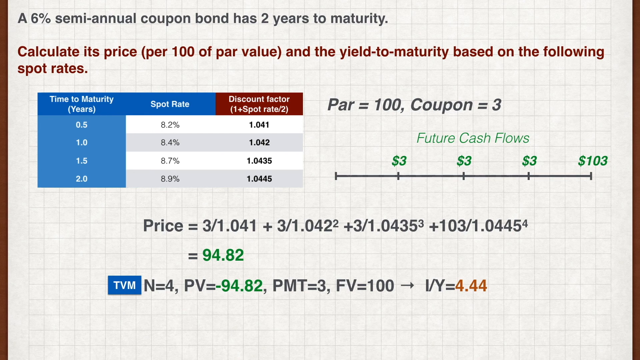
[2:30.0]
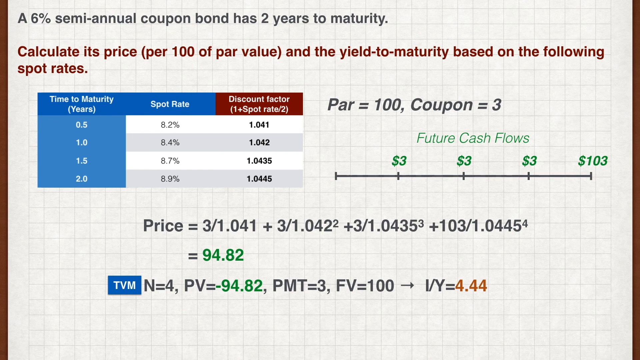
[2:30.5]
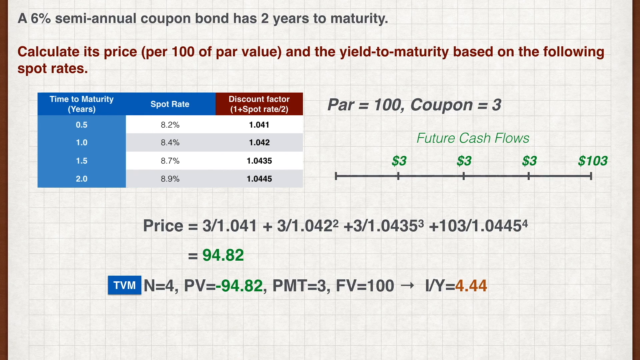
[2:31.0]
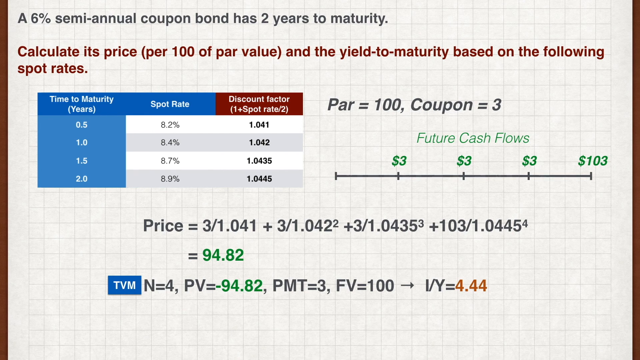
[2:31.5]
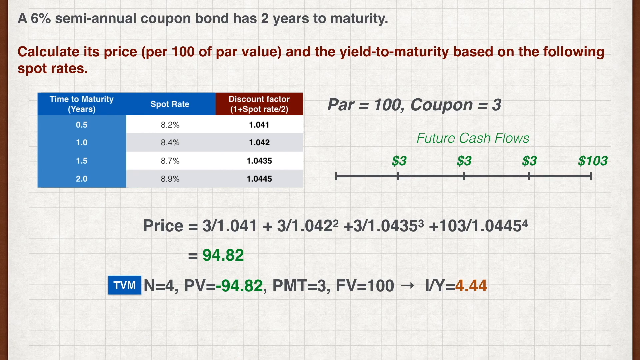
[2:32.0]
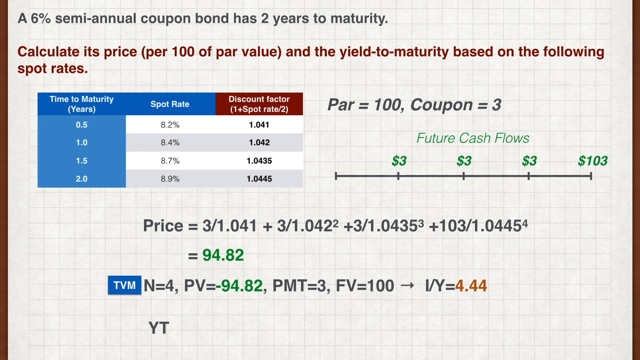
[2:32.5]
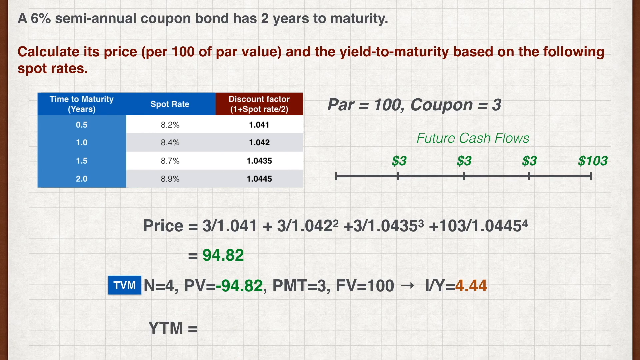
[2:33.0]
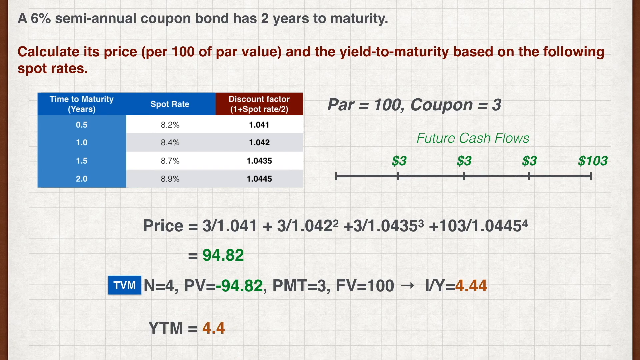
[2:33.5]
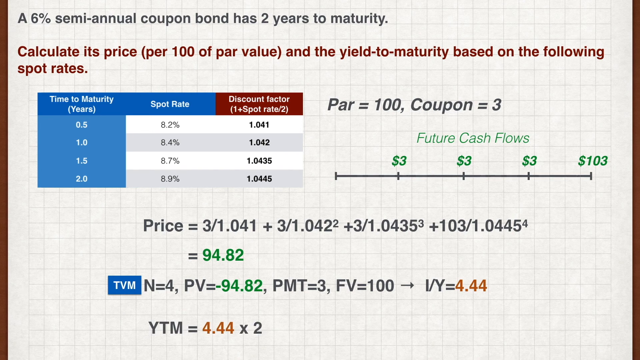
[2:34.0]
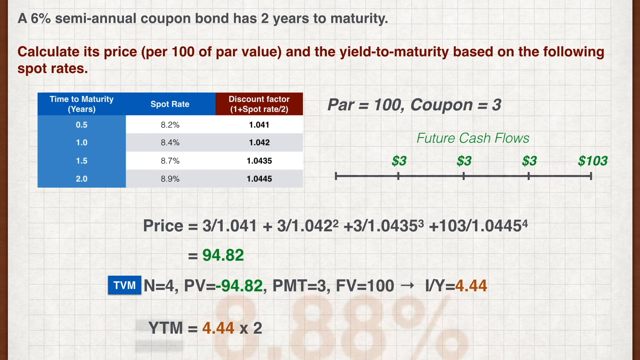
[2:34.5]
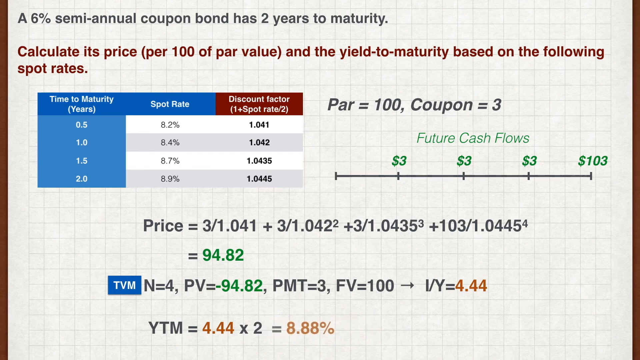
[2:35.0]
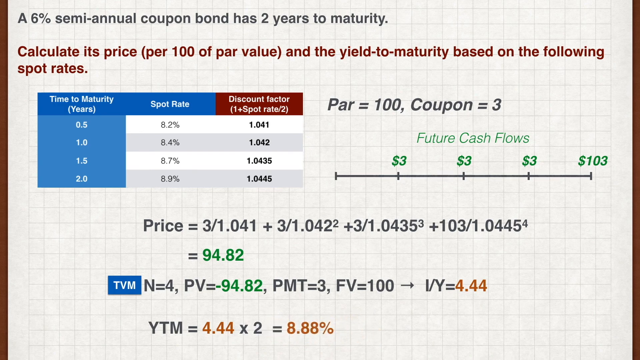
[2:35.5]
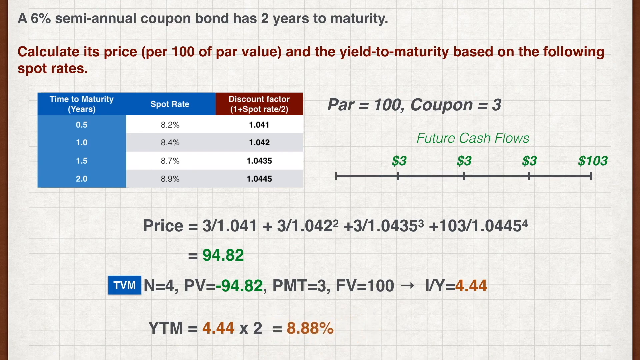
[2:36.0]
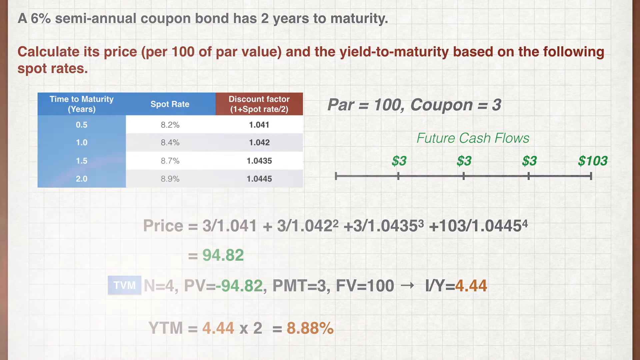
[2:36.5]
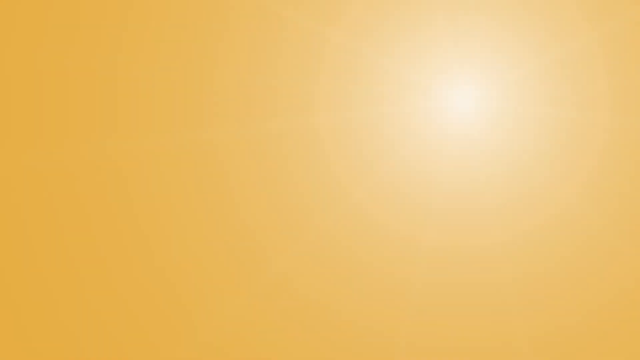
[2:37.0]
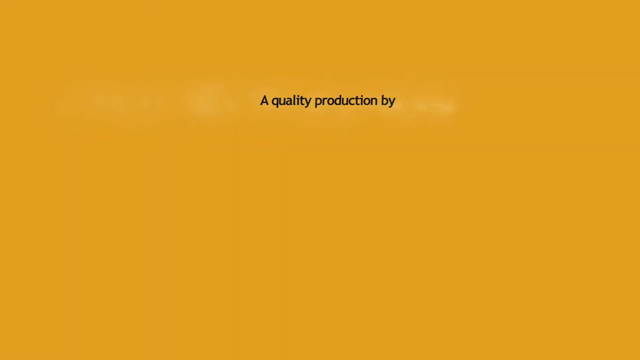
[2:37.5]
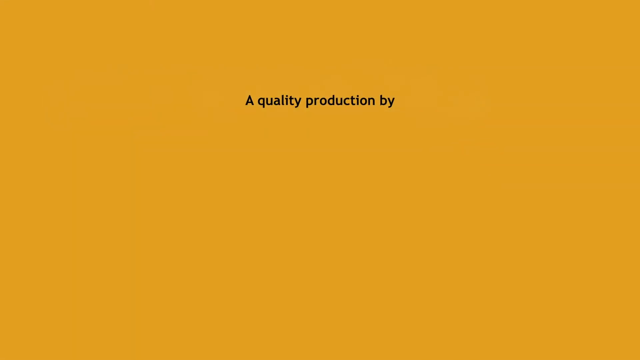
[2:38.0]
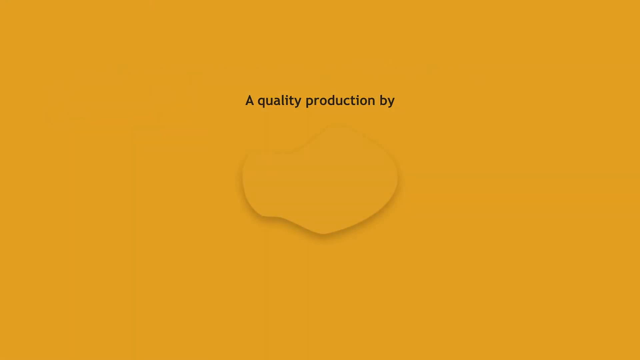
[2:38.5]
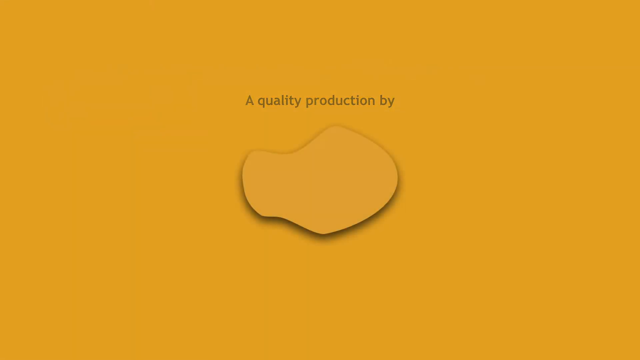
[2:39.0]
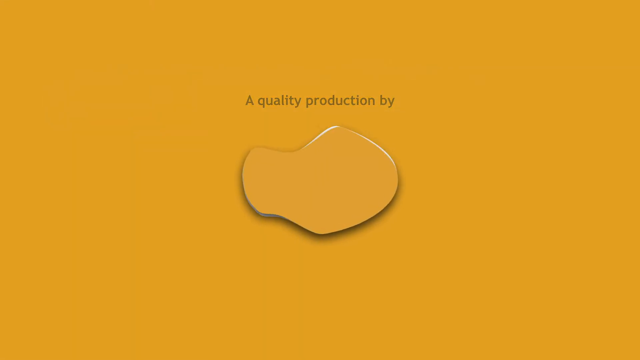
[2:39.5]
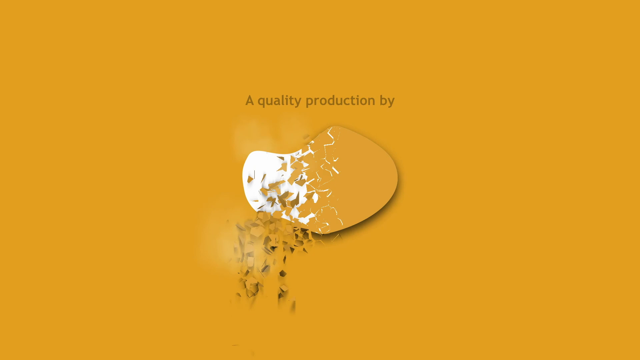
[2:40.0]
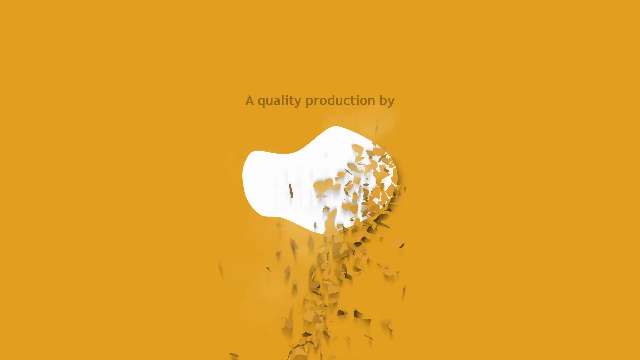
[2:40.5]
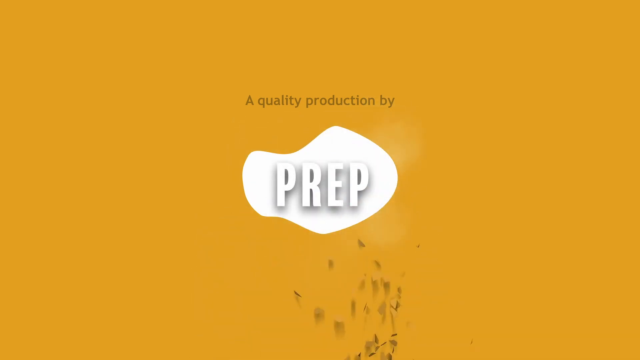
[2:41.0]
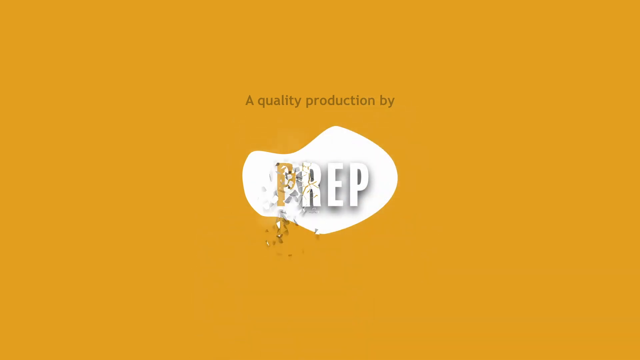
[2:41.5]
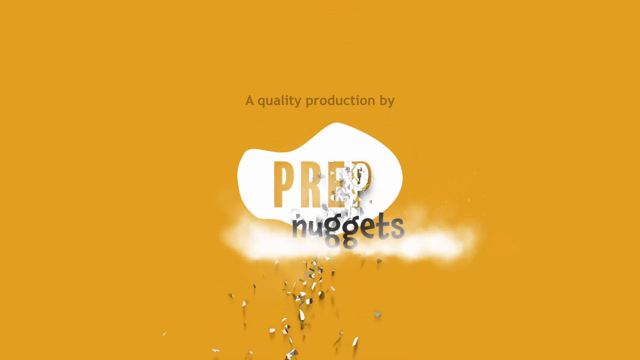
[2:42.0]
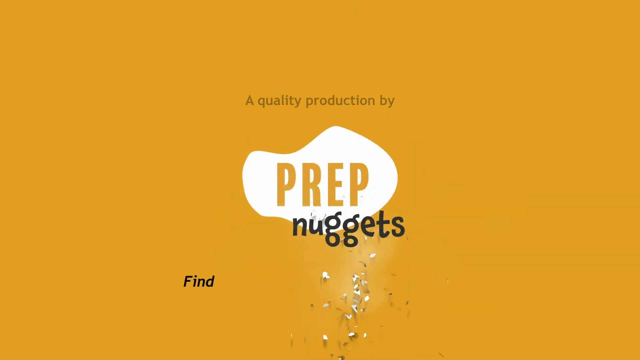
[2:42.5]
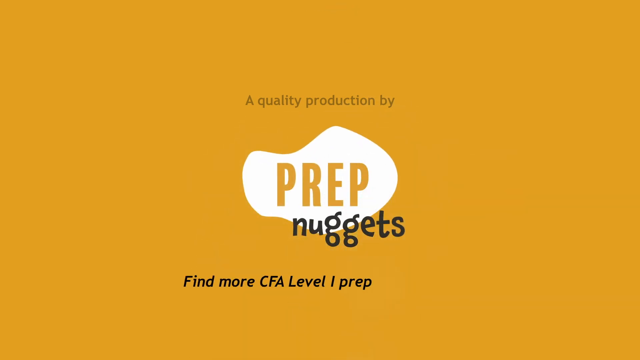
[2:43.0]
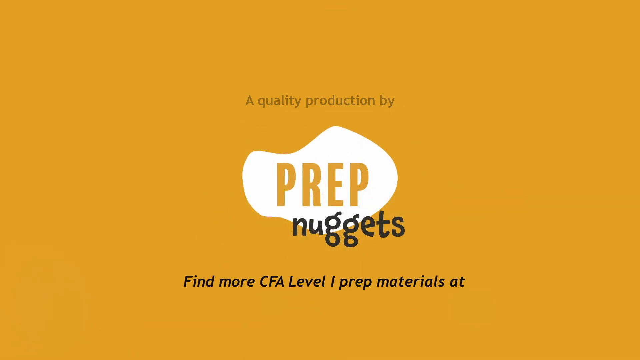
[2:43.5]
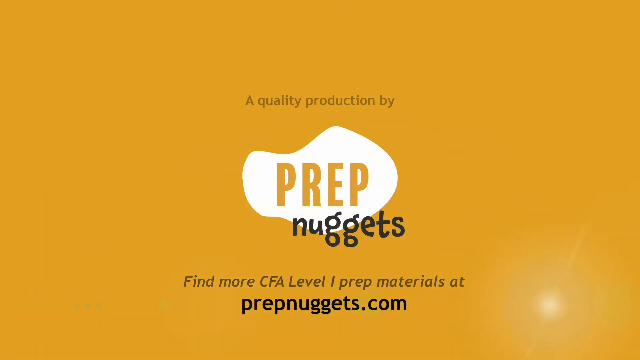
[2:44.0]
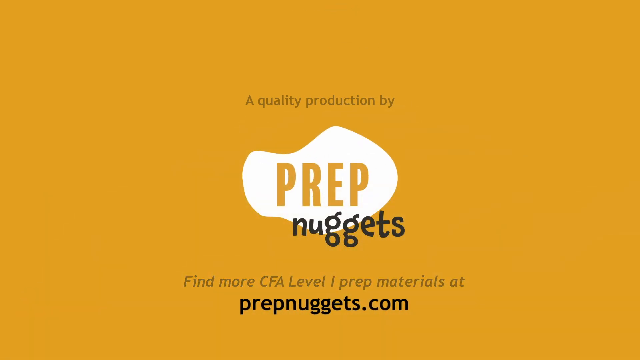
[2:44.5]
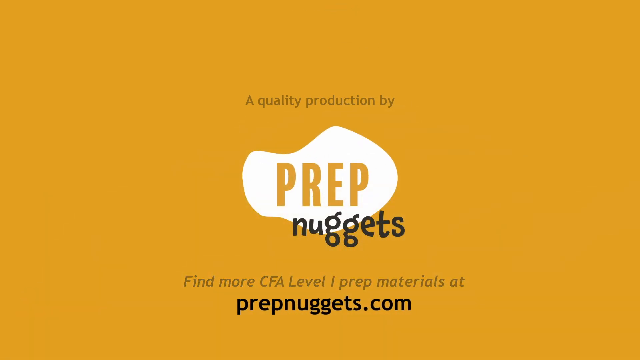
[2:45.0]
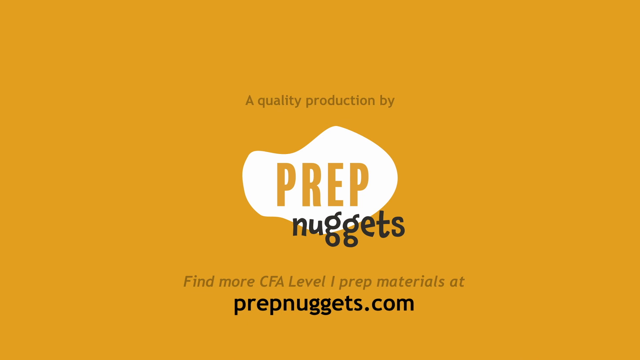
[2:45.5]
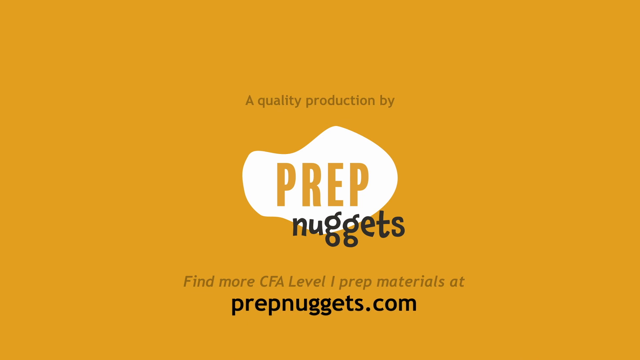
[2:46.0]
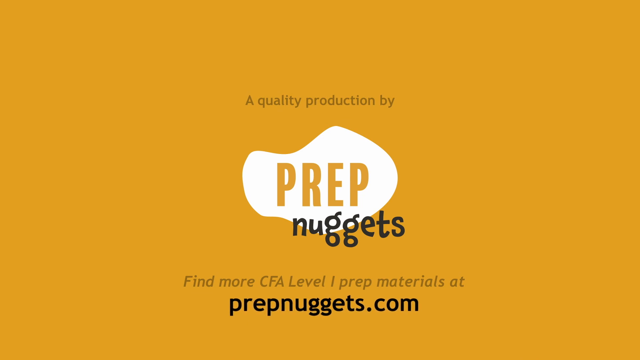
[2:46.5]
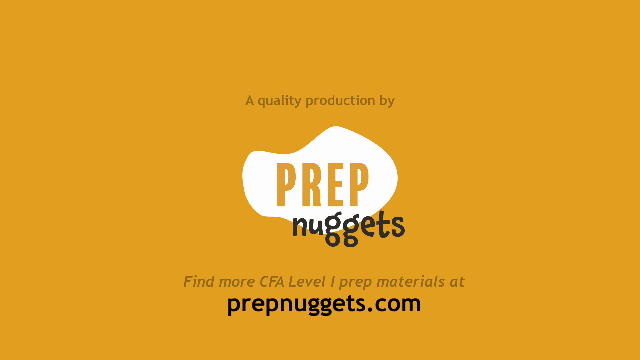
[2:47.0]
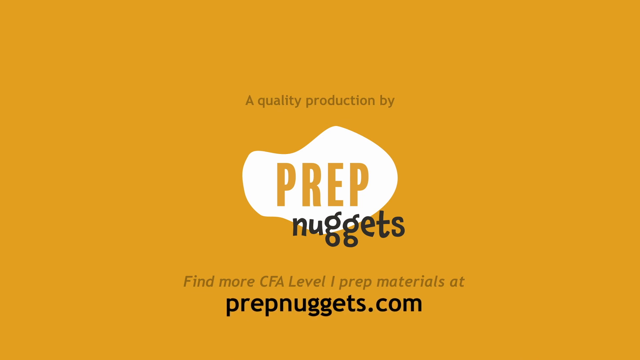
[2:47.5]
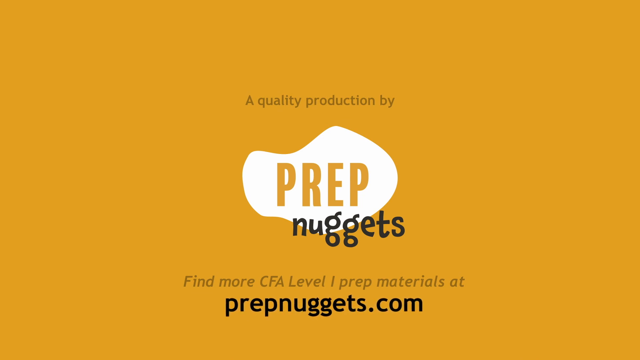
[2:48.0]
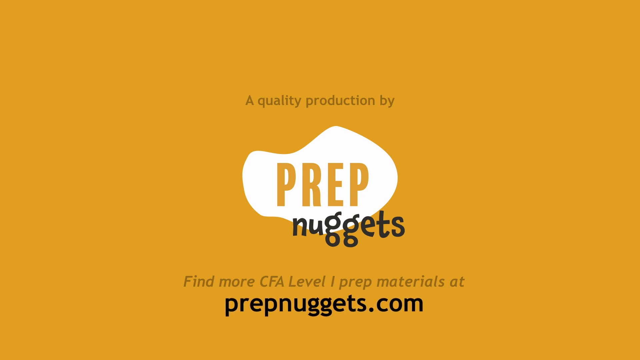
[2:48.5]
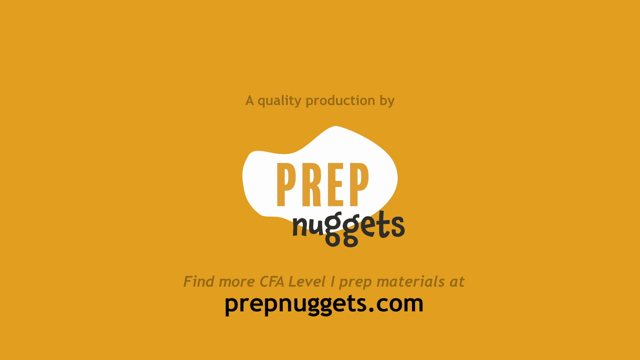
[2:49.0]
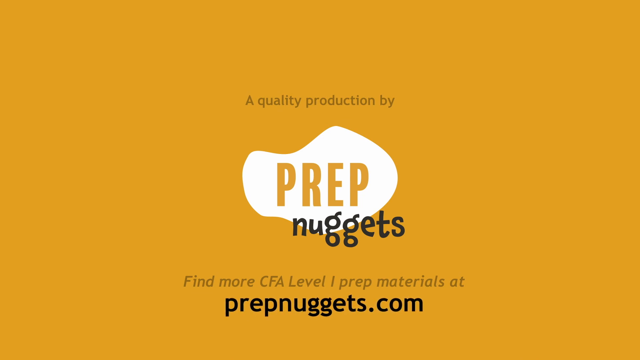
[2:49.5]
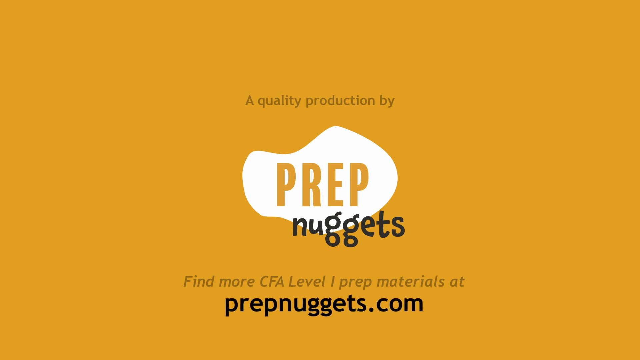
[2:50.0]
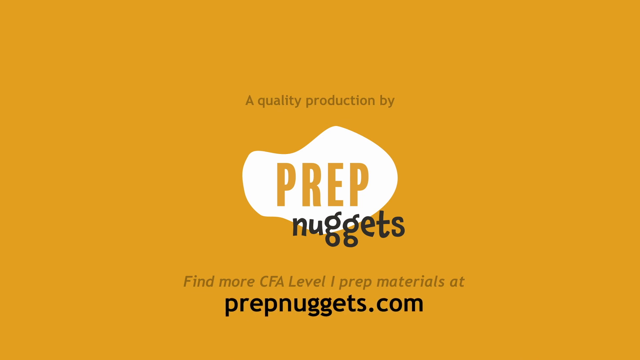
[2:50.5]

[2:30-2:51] The same page on calculating the price and the yield to maturity from the spot rates remains, with N = 4, PV = -94.82, PMT = 3 and FV = 100, and an arrow leading to I/Y = 4.44. Another equation is added at the bottom: YTM = 4.44 × 2 = 8.88%, apparently the final answer. The video then goes to a bright orange screen that reads "Quality Productions by PrepNuggets" and "Find more CFA Level 1 Prep Materials at" followed by the website prepnuggets.com. The PrepNuggets logo is a white oblong figure with "Prep" in it and "Nuggets" underneath. The last page is all orange with black letters, except for "Prep" in the logo.